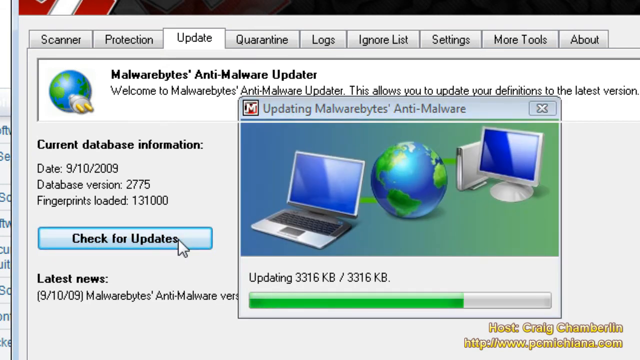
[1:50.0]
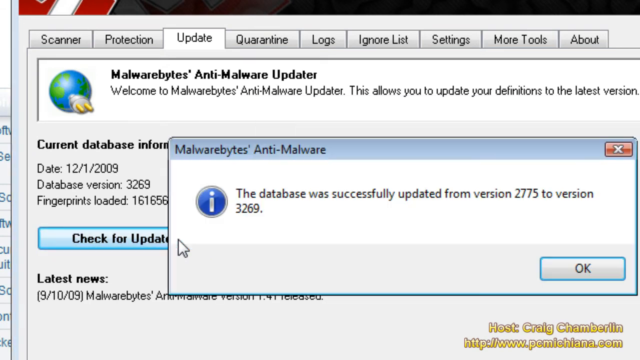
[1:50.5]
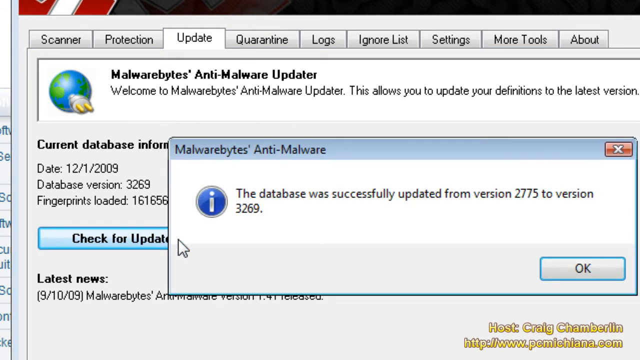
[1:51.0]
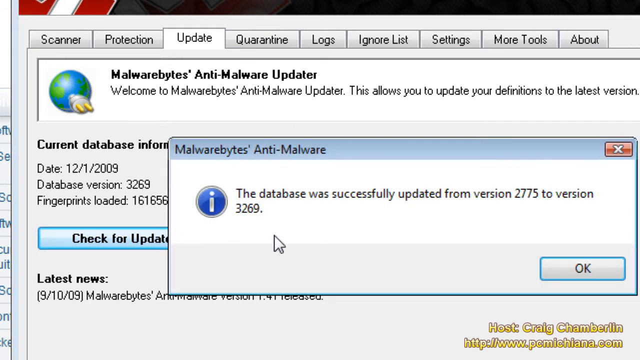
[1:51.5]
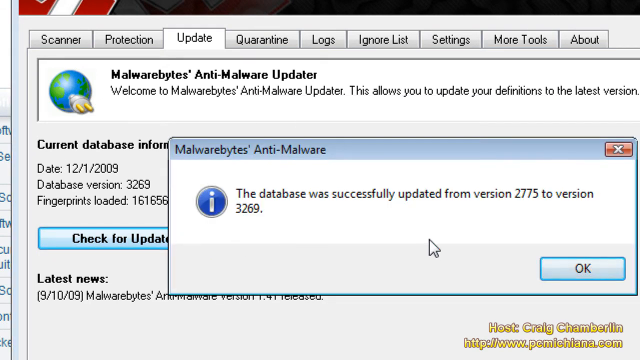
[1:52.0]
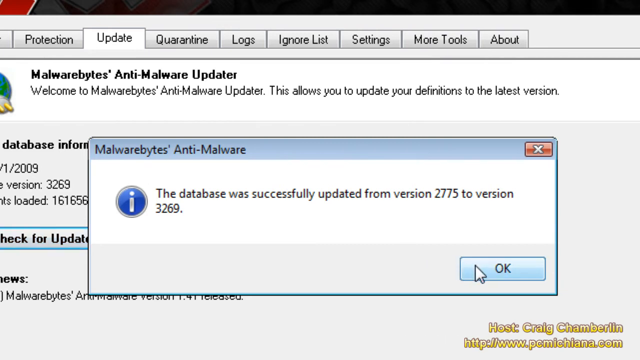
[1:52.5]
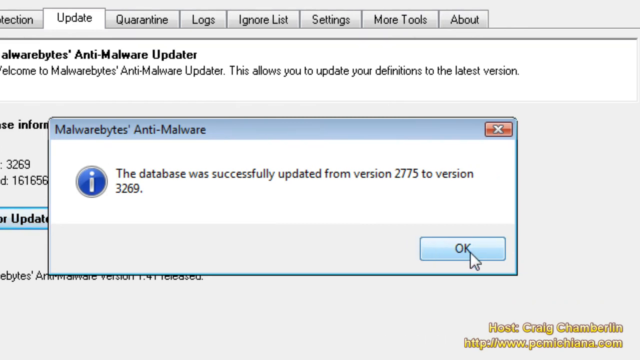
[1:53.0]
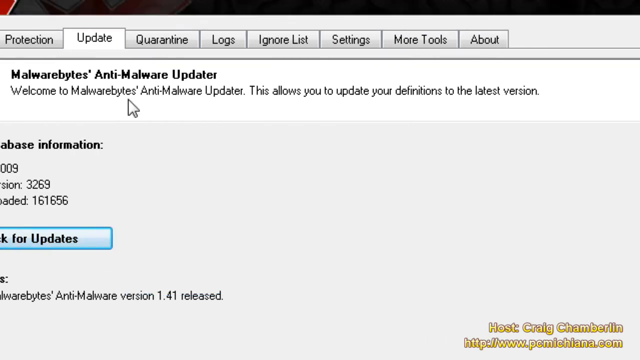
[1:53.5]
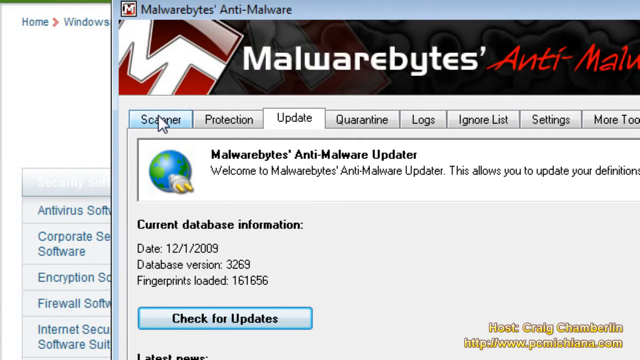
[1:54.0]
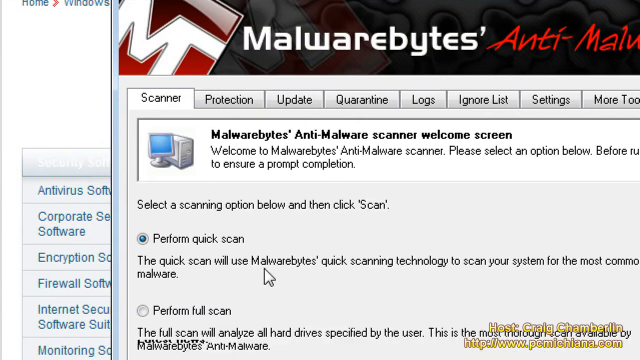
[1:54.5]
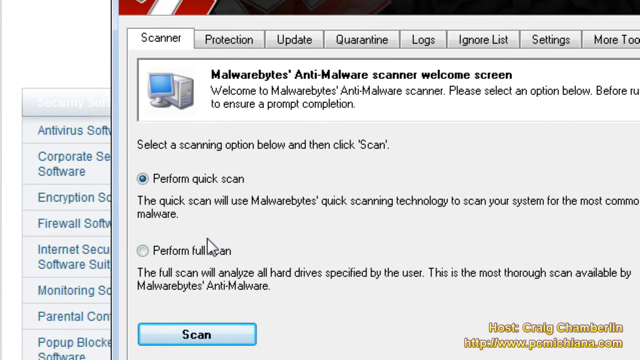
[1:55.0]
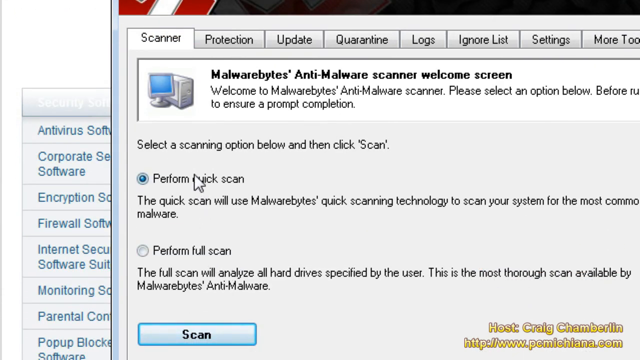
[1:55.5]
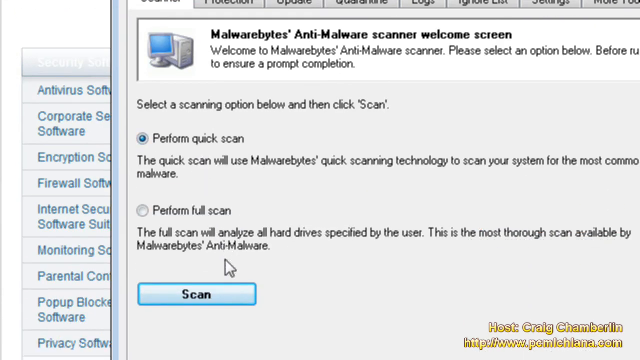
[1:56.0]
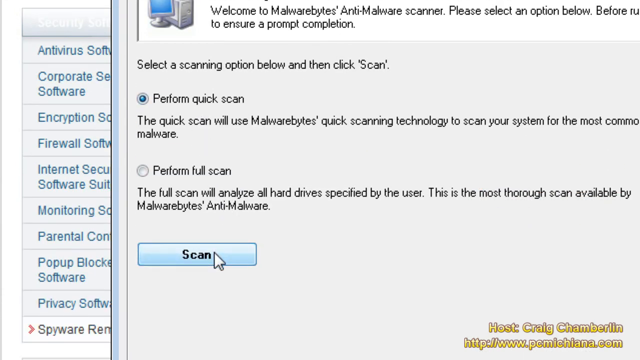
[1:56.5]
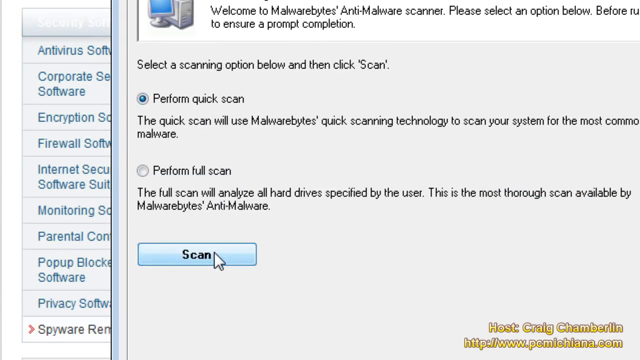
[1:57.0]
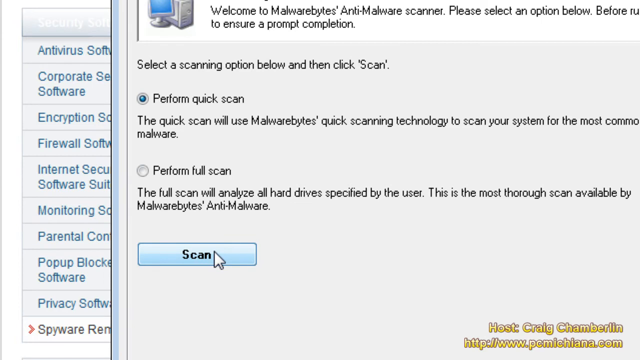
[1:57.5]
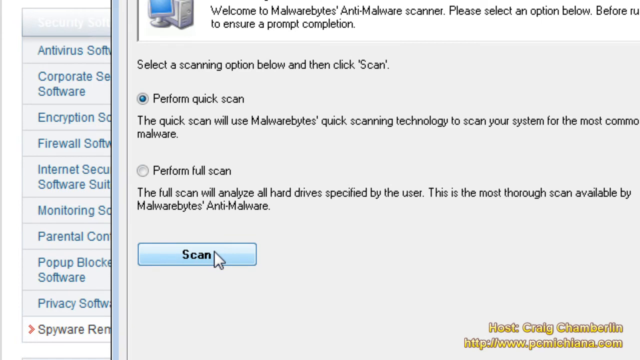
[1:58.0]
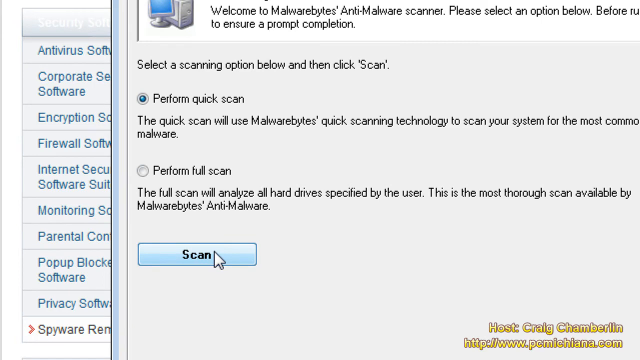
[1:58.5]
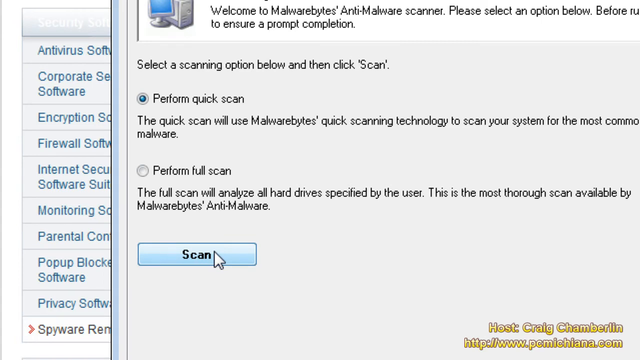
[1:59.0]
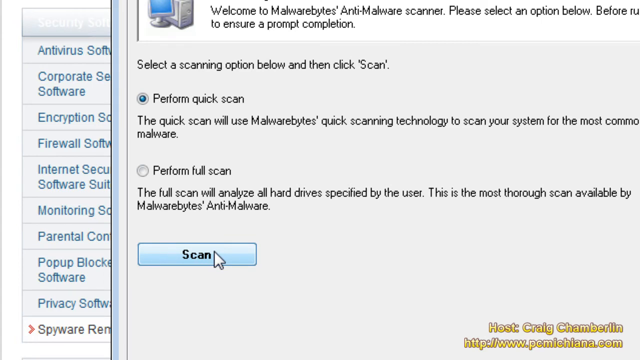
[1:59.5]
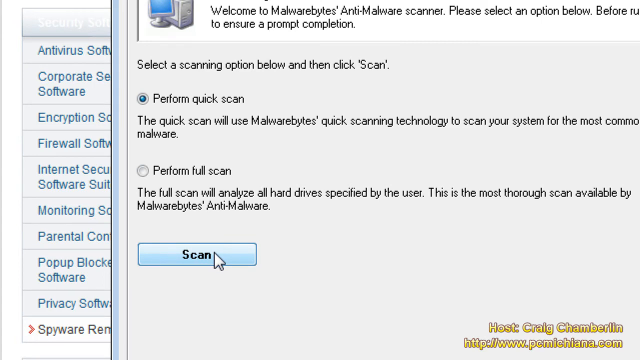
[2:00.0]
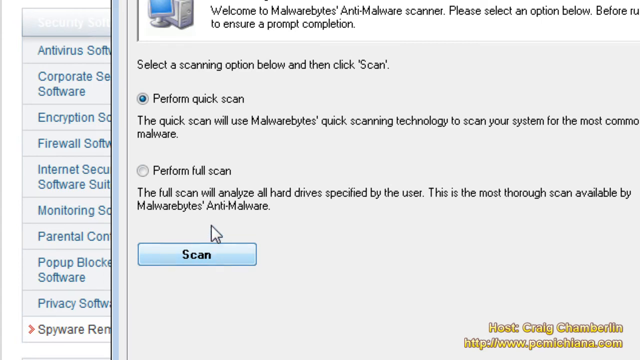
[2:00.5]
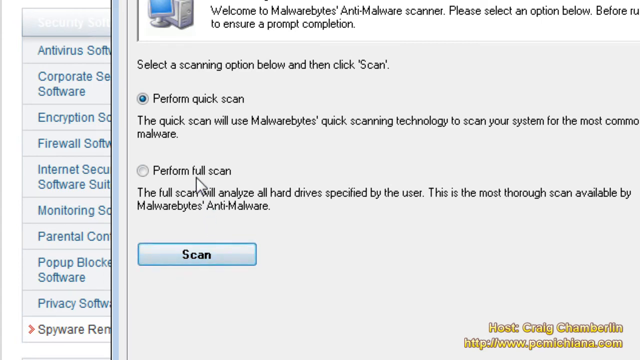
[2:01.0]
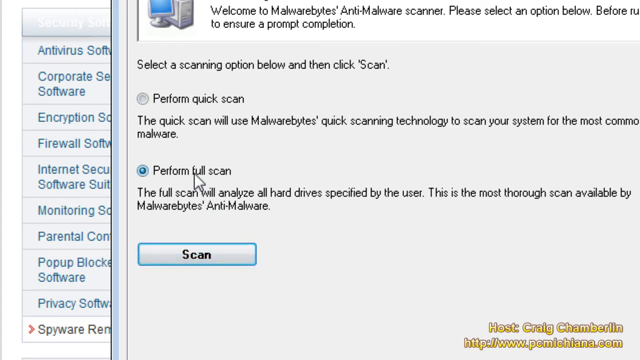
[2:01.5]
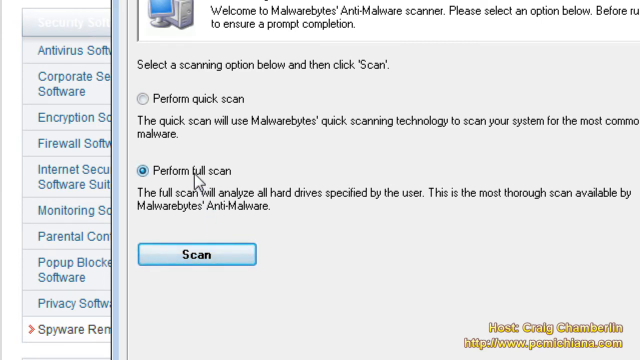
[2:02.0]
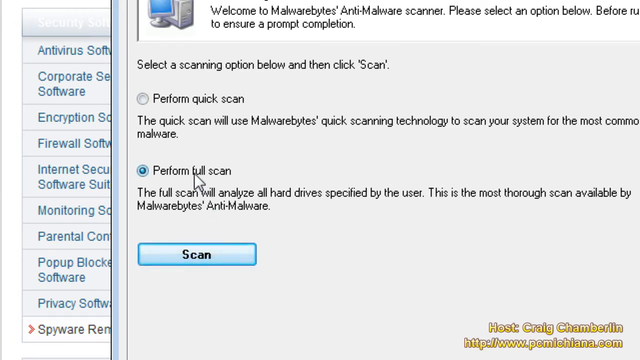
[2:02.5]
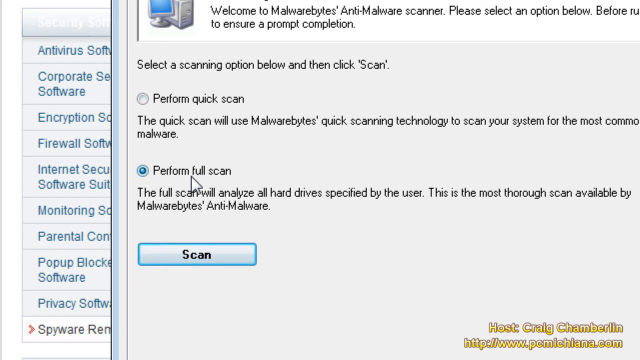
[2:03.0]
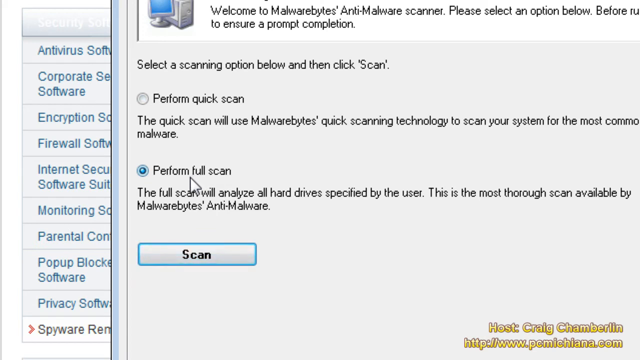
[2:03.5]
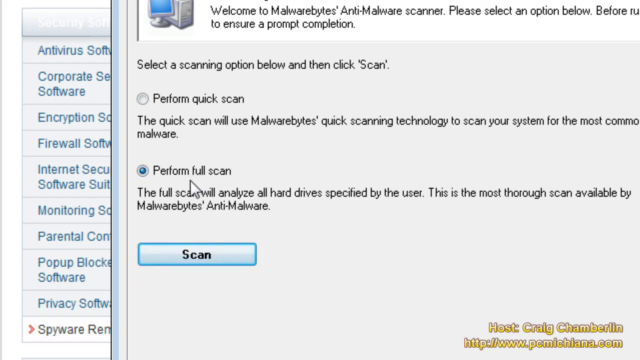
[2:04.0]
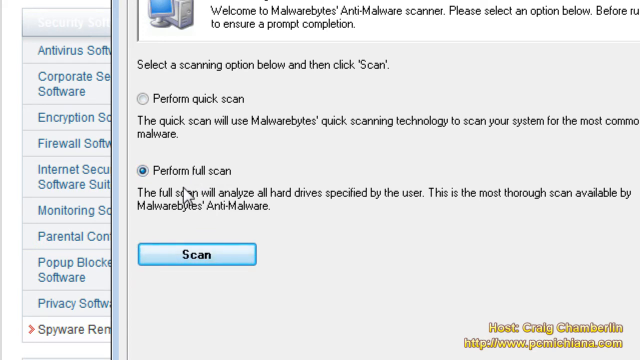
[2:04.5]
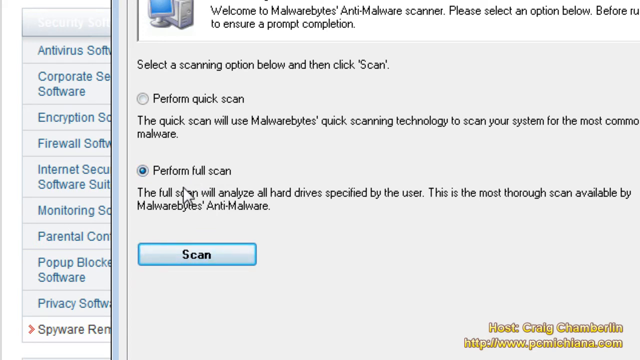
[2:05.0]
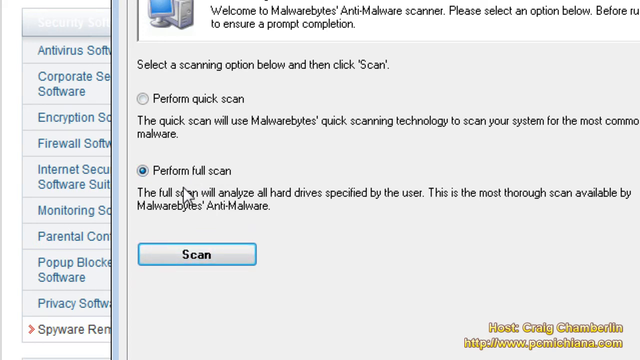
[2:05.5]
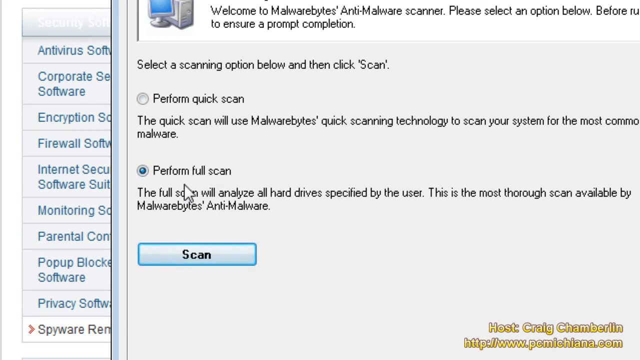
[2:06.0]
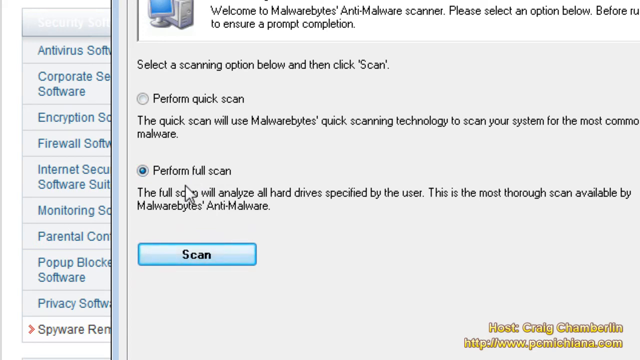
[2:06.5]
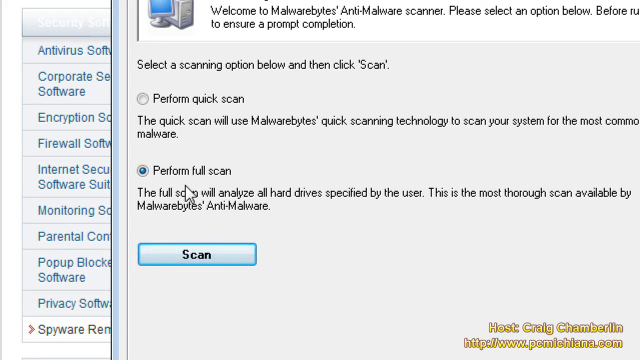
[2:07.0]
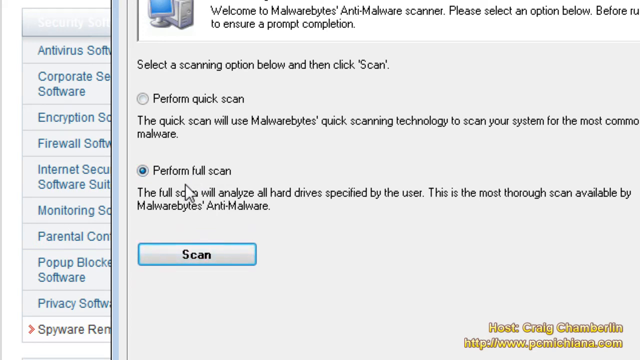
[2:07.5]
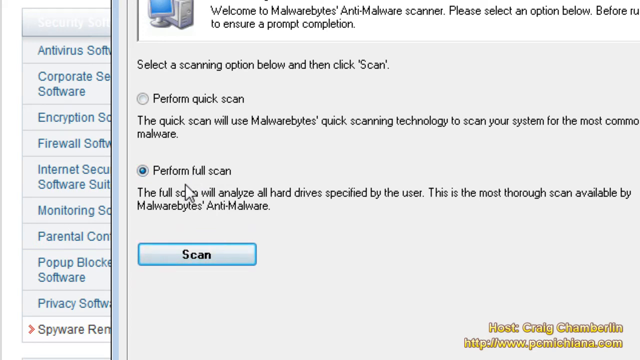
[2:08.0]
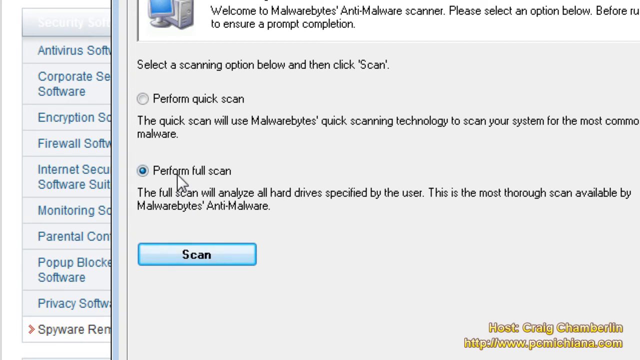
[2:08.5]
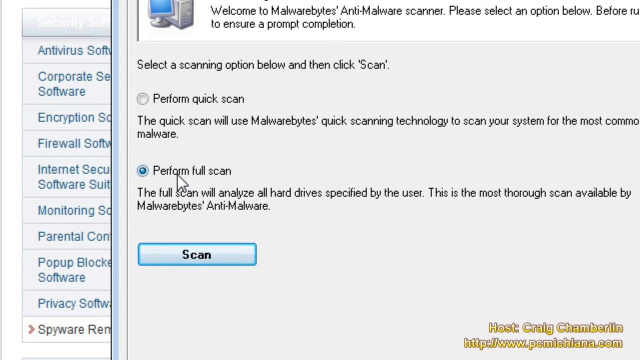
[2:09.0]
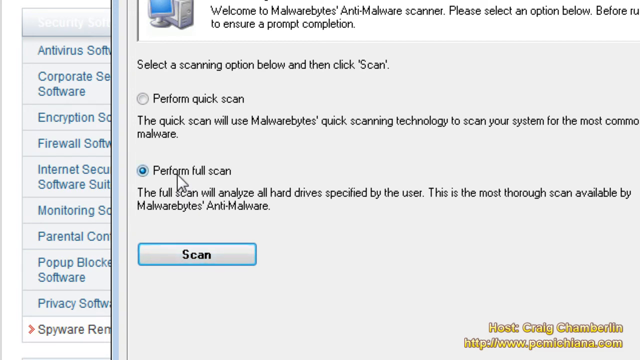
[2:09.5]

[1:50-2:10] A message says that items are activated and that "the database was successfully updated from version 2775 to version 3629". An Okay button is at the bottom right of the screen in the Malwarebytes Anti-Malware window. After Okay is clicked, the screen reads "Welcome to Malwarebytes Anti-Malware update" and "this allows you to update your definitions to the latest version". A horizontal row of buttons across the top of the screen reads "Protection Update Quarantine Logs Ignore Live Settings More Tools and About".